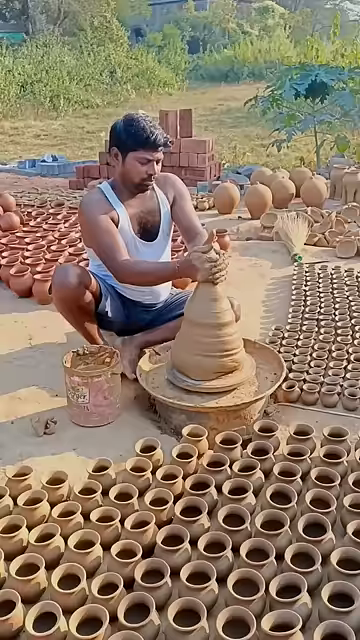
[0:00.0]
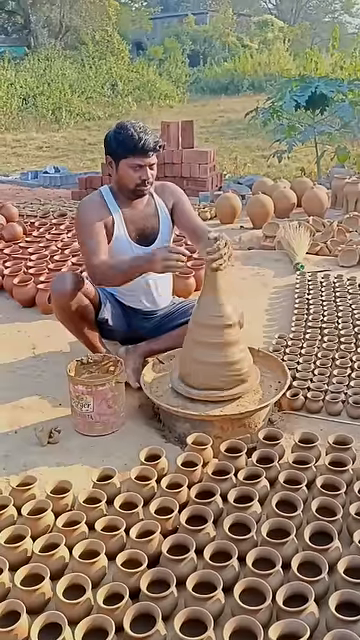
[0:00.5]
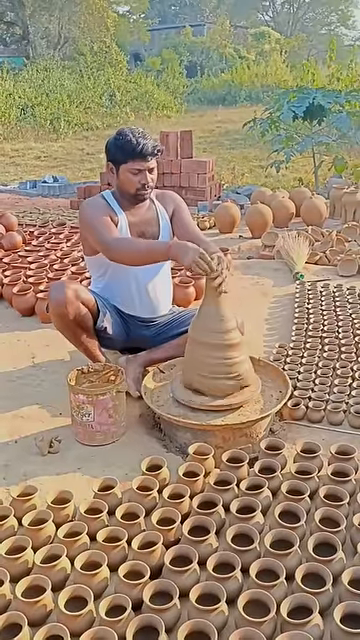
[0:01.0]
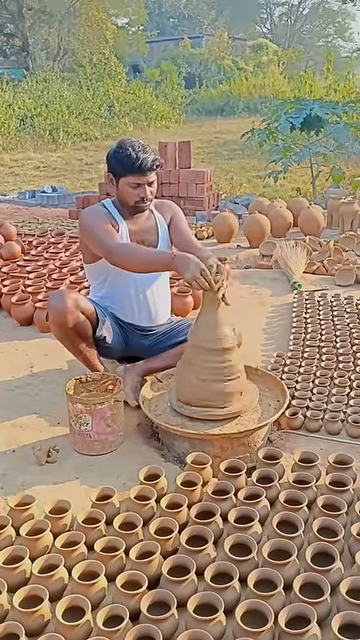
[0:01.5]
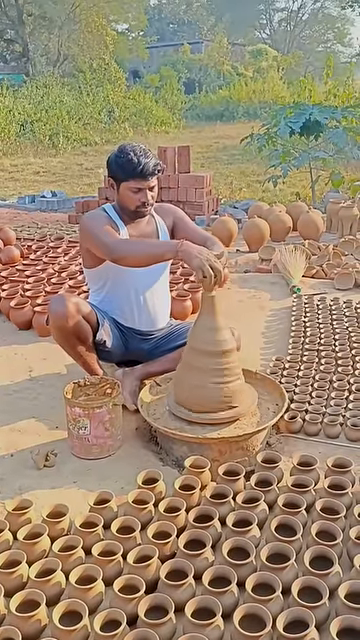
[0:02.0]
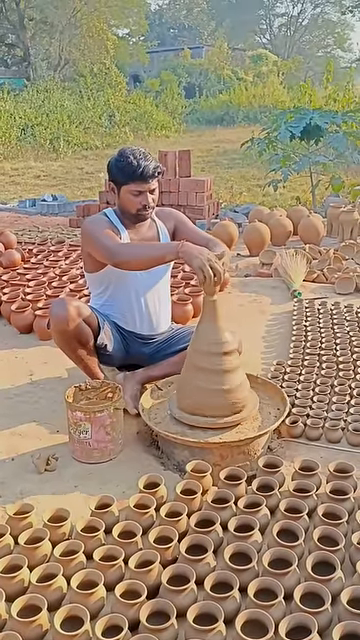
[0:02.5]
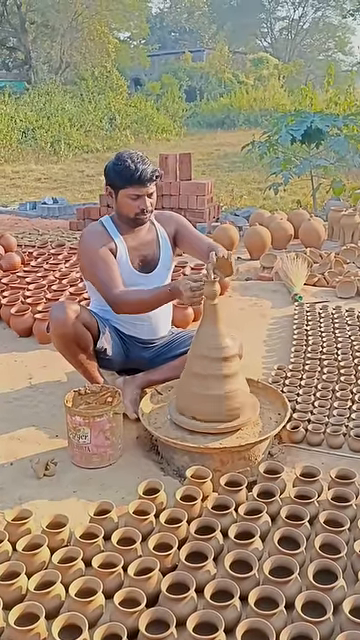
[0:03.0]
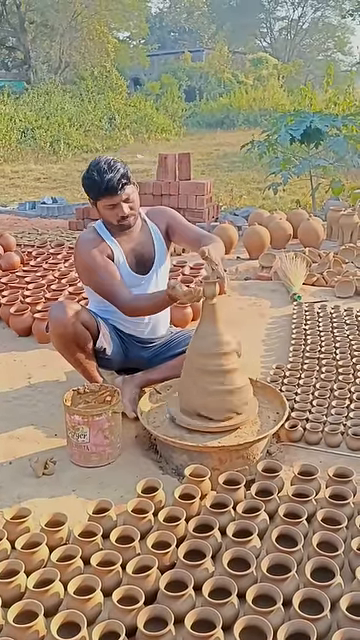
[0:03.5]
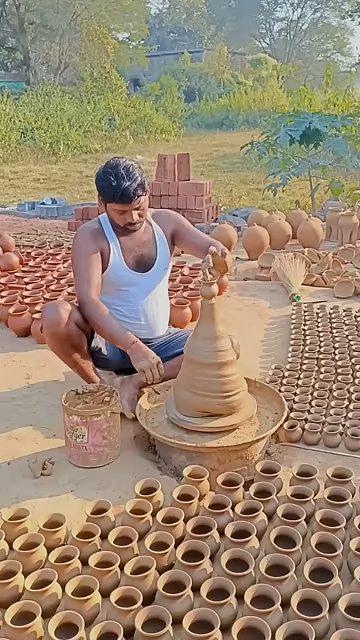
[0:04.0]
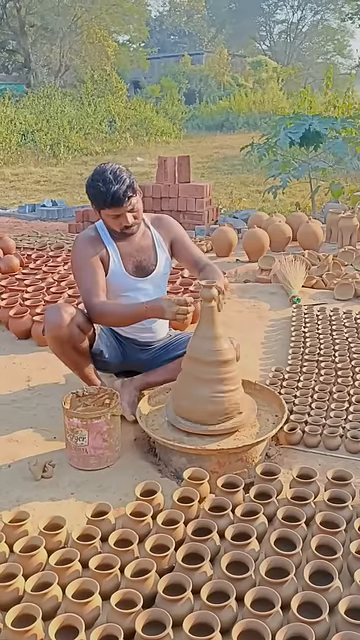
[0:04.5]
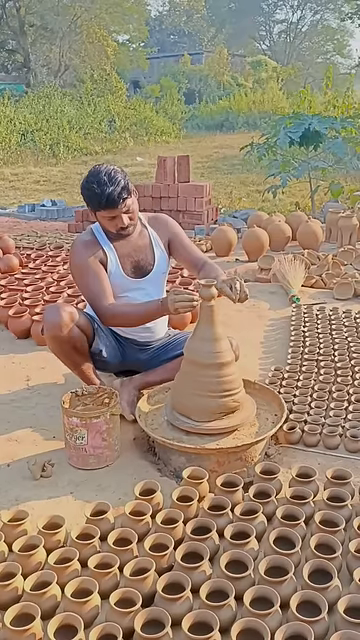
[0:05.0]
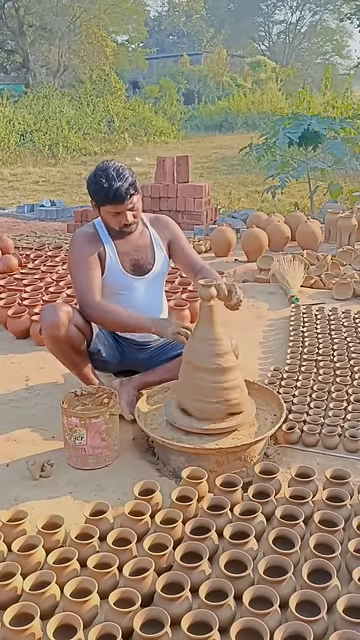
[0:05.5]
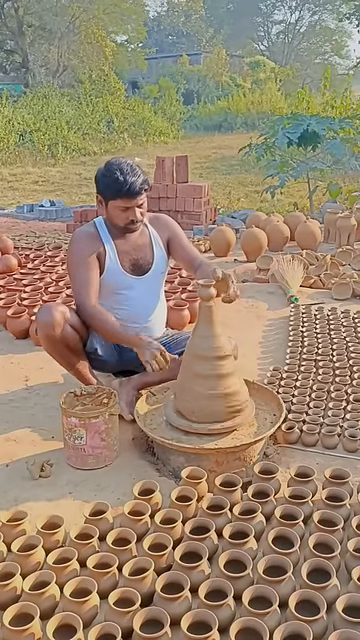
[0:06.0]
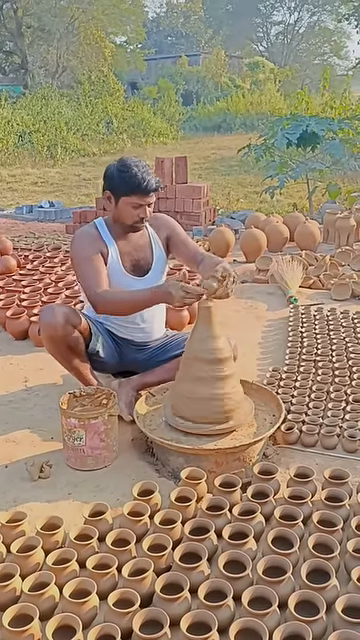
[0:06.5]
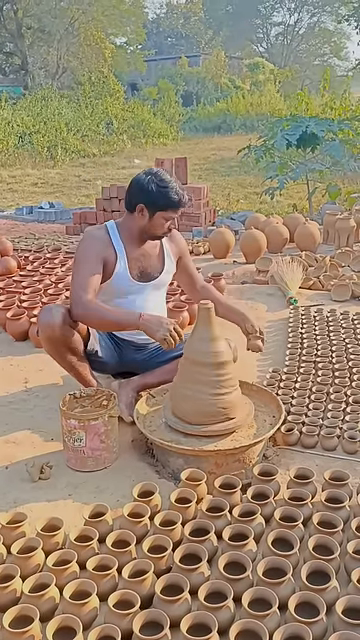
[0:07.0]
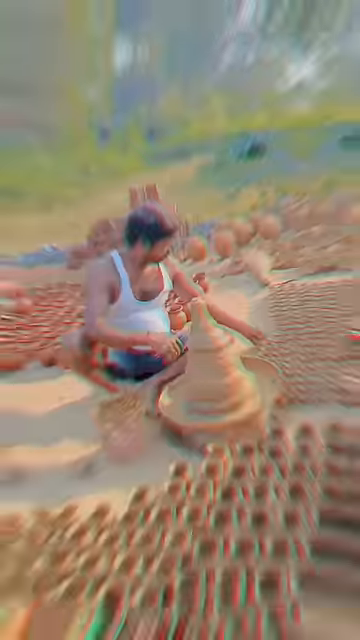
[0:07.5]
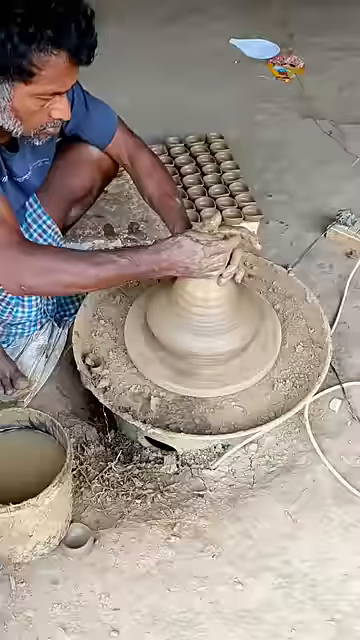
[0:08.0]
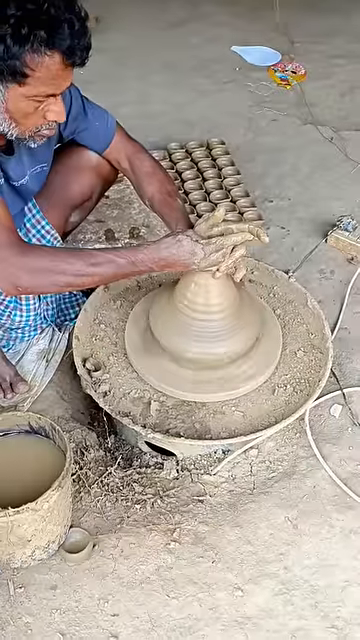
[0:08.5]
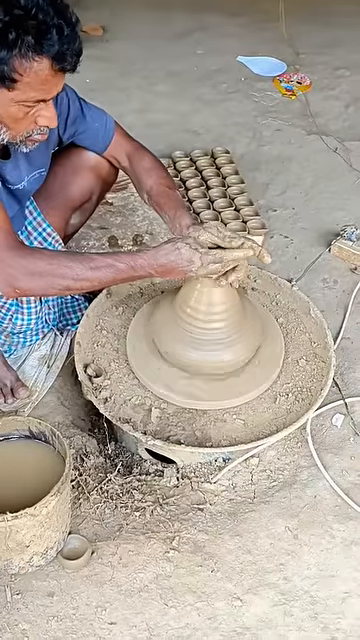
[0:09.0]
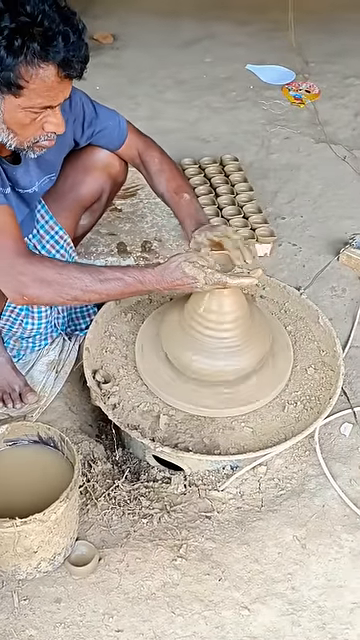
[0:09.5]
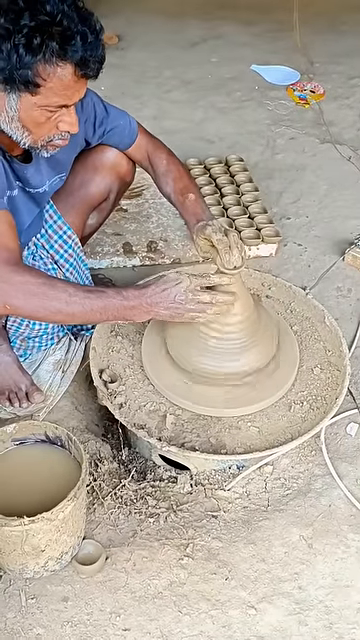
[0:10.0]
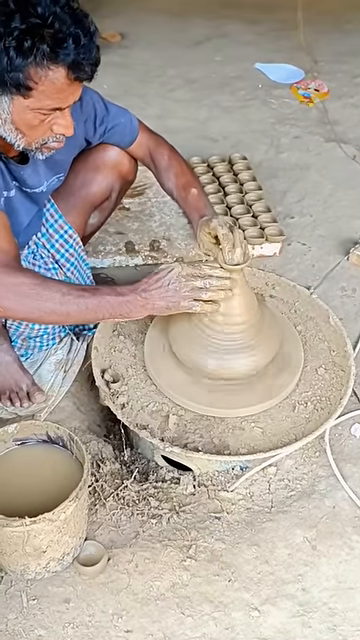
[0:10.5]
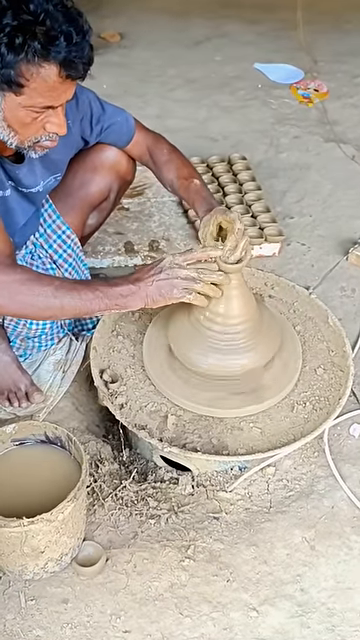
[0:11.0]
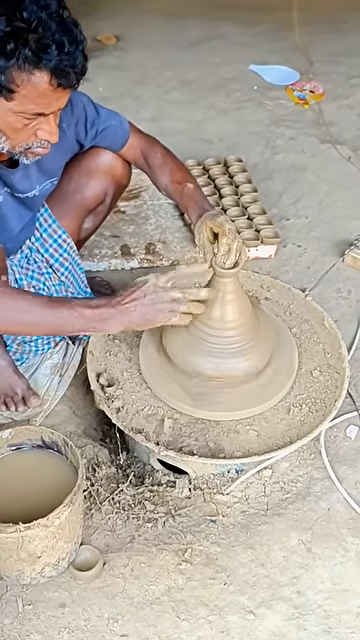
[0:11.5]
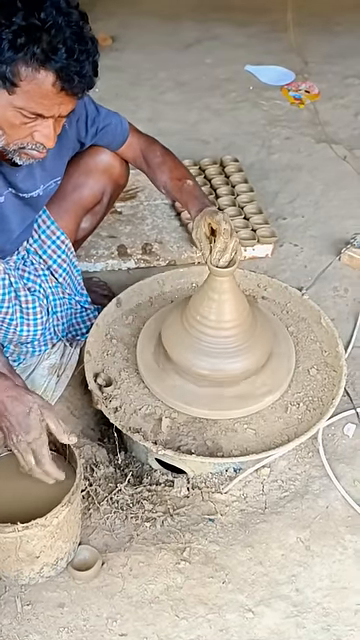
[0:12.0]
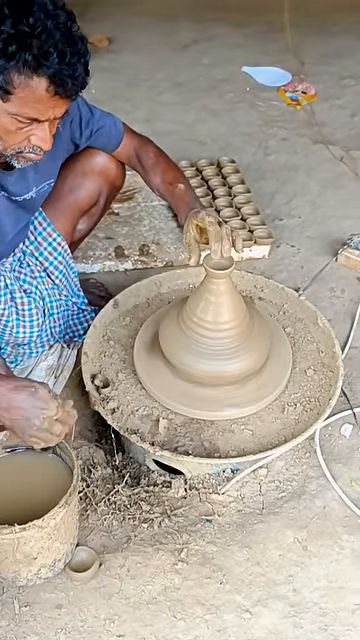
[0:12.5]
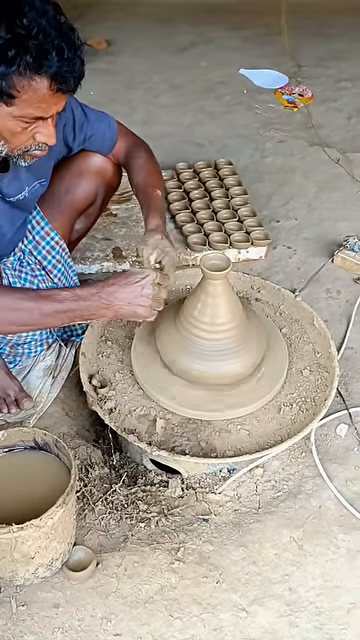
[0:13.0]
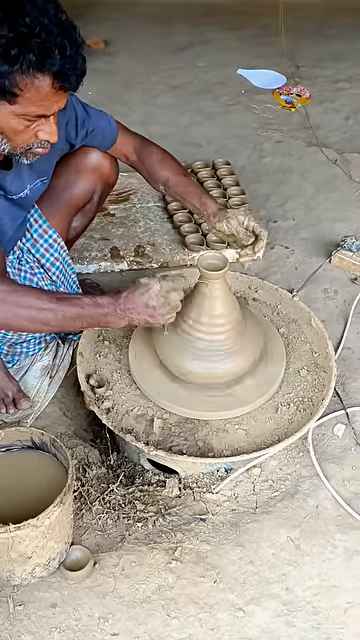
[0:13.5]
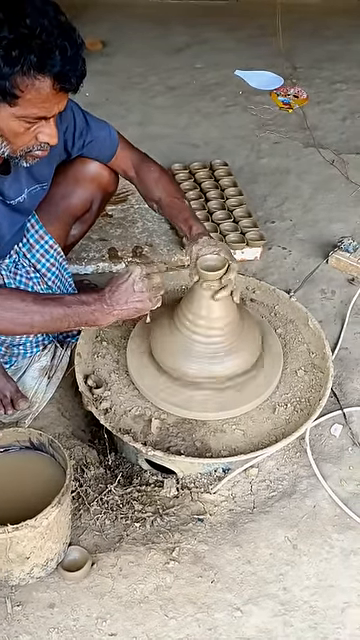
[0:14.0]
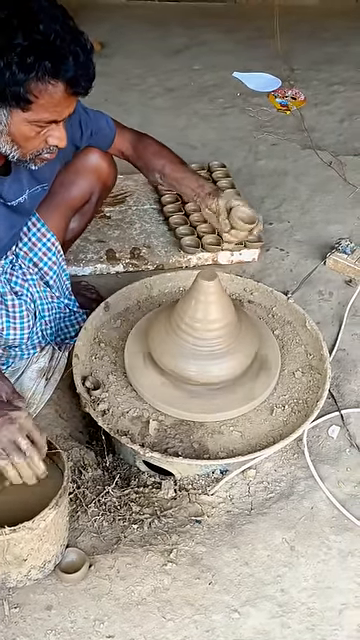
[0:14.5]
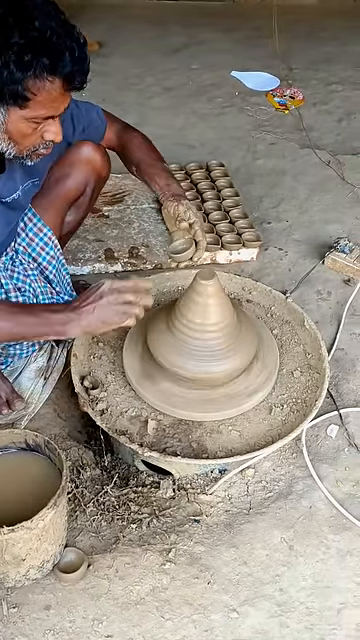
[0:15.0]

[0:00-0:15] An Indian man in a white tank top and gray shorts is kind of squatting at a potter's wheel in front of him. A bucket is on his right with his right hand in it, and his left hand is on the pottery wheel. A narrow vase shape is visible, kind of a big triangular lump of clay extending upward maybe about a foot and a half. A bunch of pots are on the ground around him; behind him are some darker red pots that look like they may have been fired, and a bunch of small vases and small jars are on the ground, apparently as if he has been throwing pottery for a long time and it is drying in the sun. With both hands he makes a tiny pot at the very top of the giant lump of clay, then kind of pinches it off, leaving the big triangular piece of clay. The scene cuts to another, older man with a white beard and shaggy black hair. A bunch of tiny pots are next to him on a piece of plaster. He is squatting on the ground with a bucket of slip at his right and a pottery wheel in front of him, making kind of a narrow vase shape that is very tiny, roughly the size of a sauce bowl or maybe a restaurant condiment cup like a ketchup cup. He makes it on top of a pedestal of clay and then kind of pulls it off with a wire.